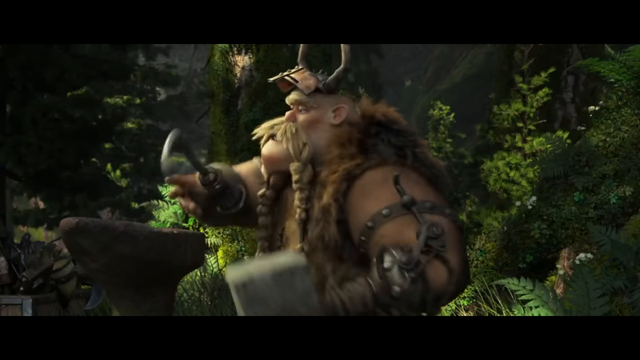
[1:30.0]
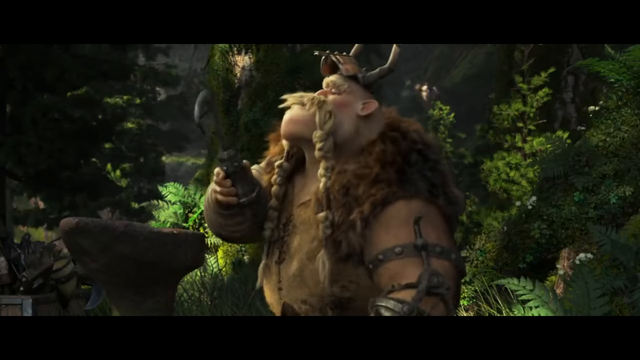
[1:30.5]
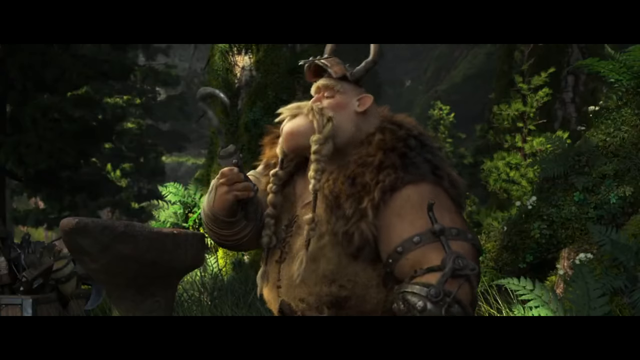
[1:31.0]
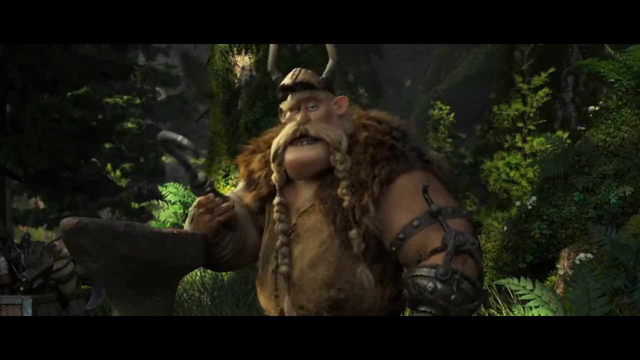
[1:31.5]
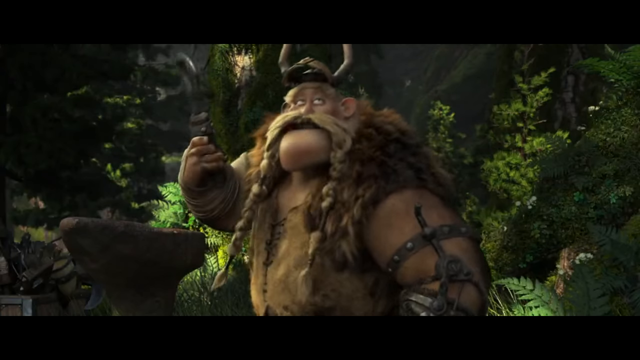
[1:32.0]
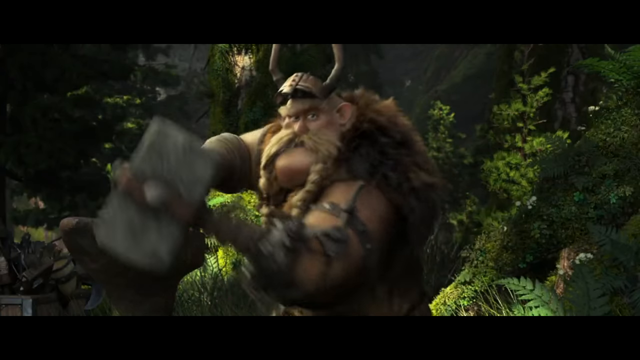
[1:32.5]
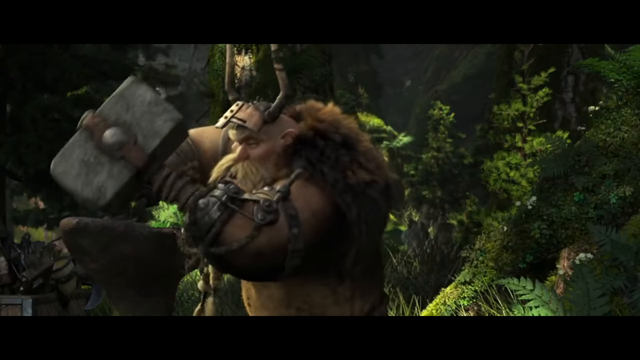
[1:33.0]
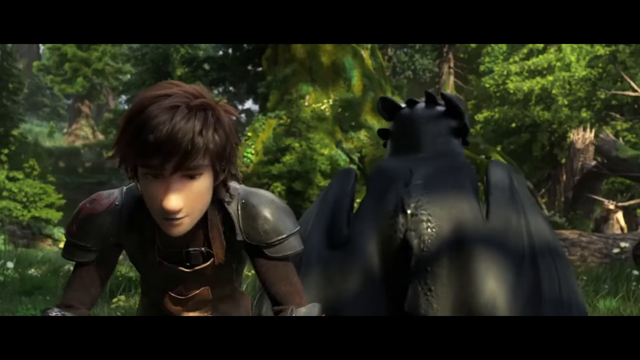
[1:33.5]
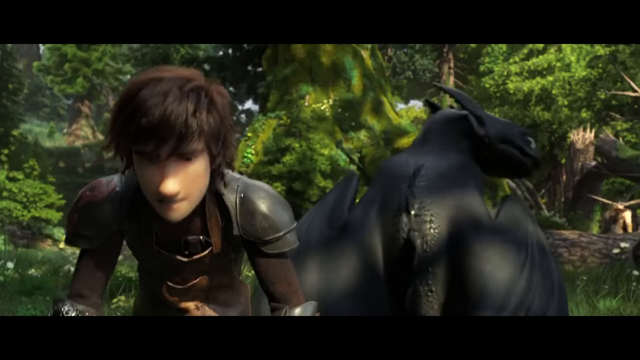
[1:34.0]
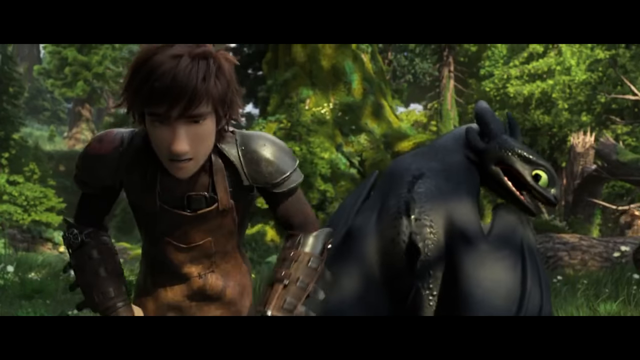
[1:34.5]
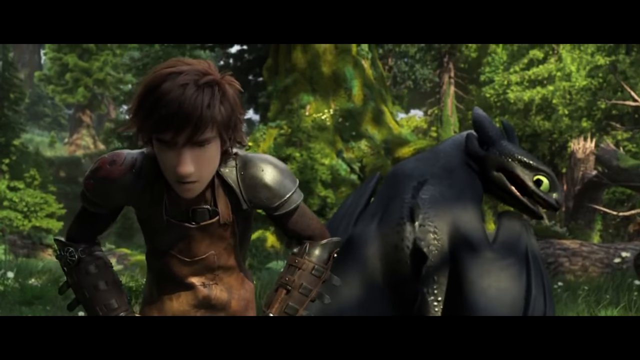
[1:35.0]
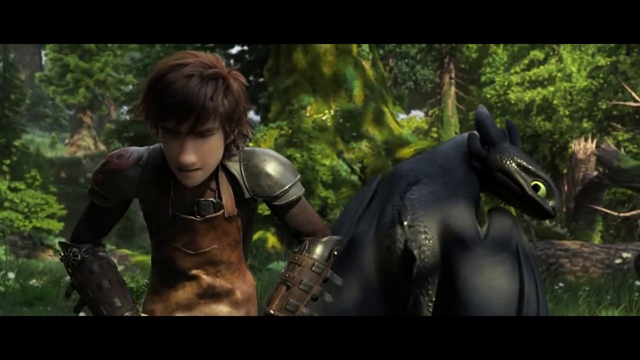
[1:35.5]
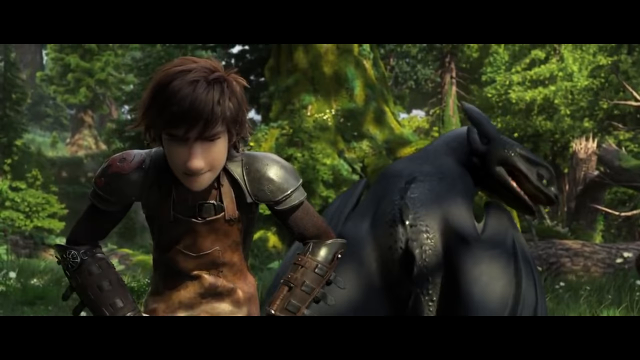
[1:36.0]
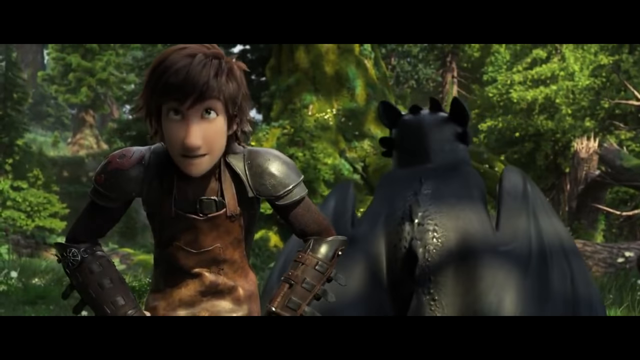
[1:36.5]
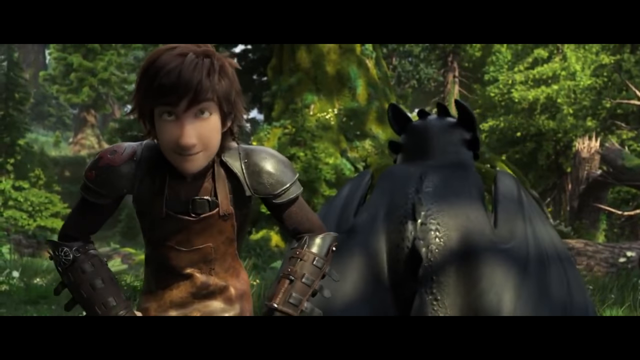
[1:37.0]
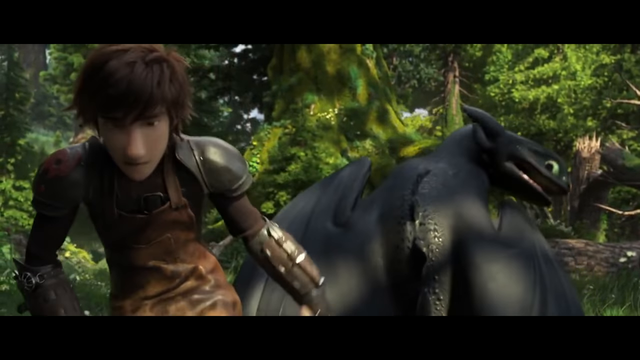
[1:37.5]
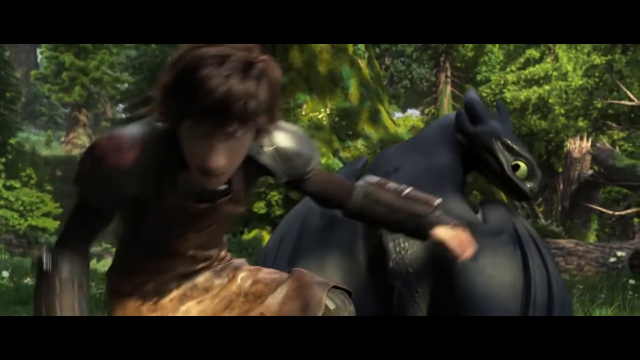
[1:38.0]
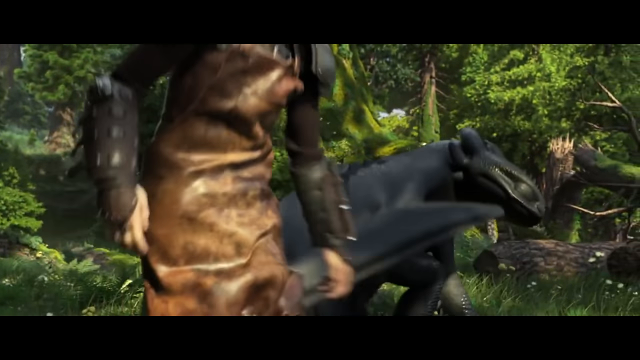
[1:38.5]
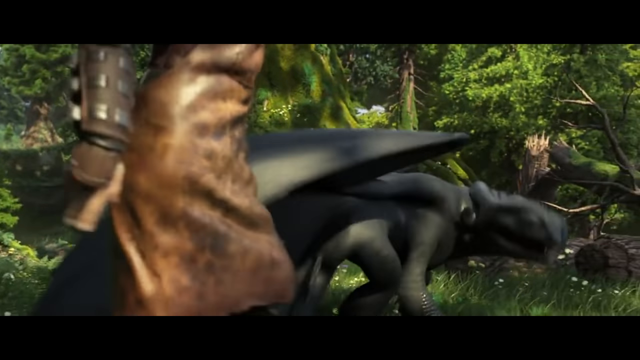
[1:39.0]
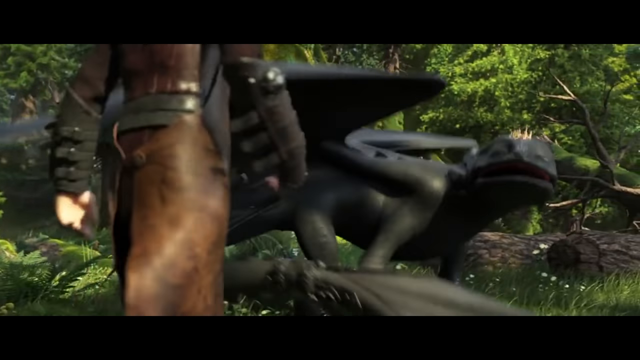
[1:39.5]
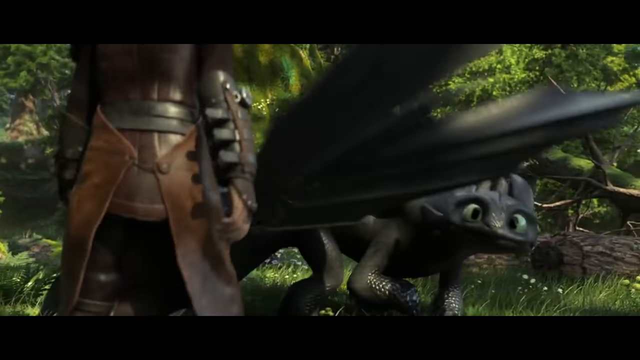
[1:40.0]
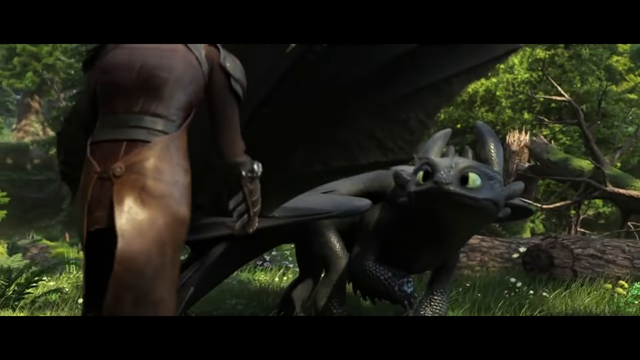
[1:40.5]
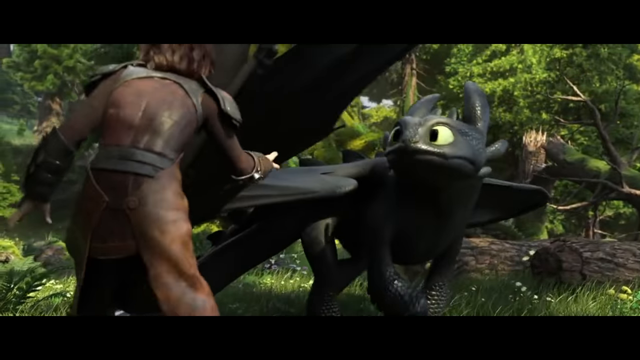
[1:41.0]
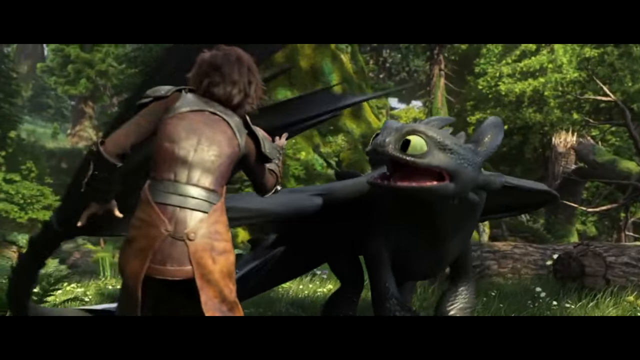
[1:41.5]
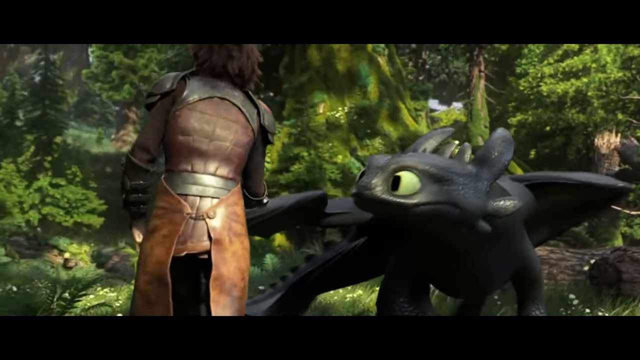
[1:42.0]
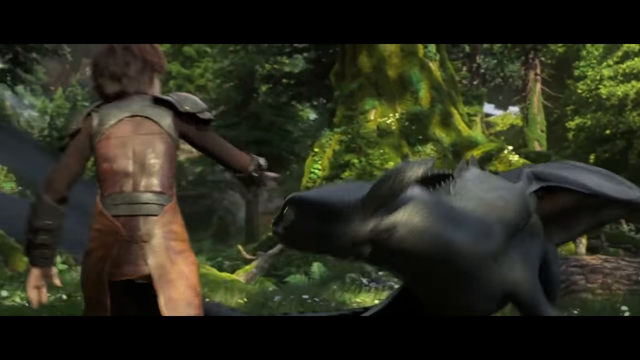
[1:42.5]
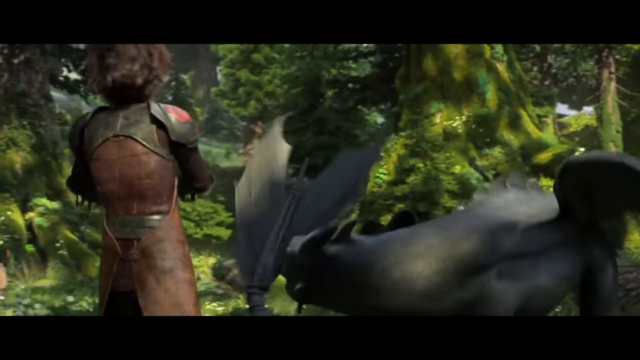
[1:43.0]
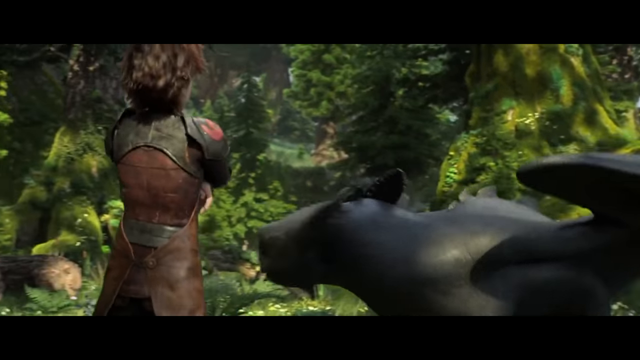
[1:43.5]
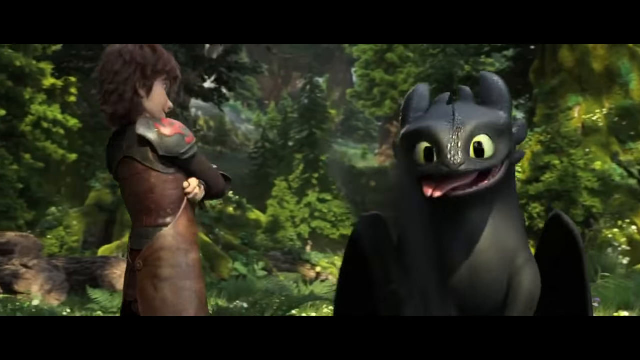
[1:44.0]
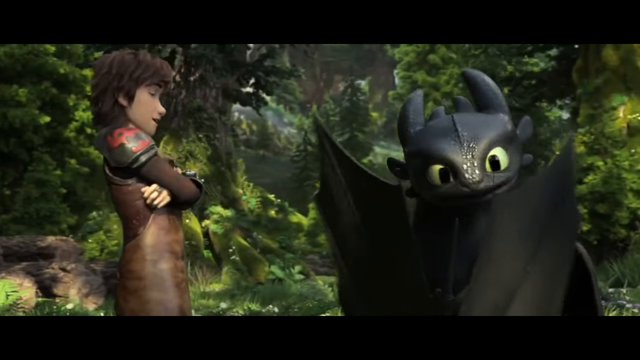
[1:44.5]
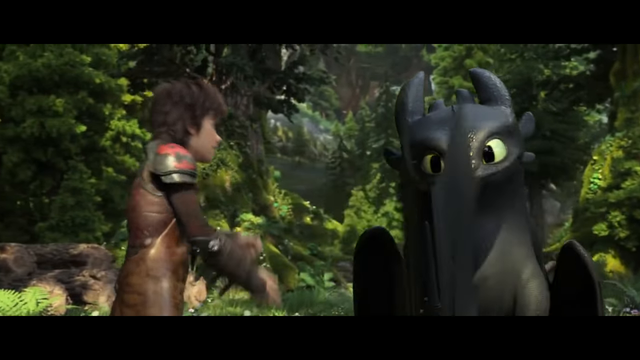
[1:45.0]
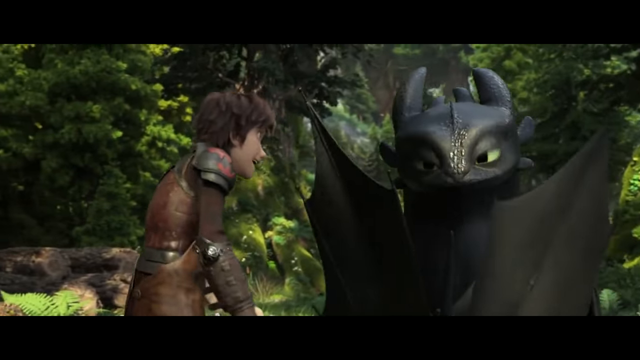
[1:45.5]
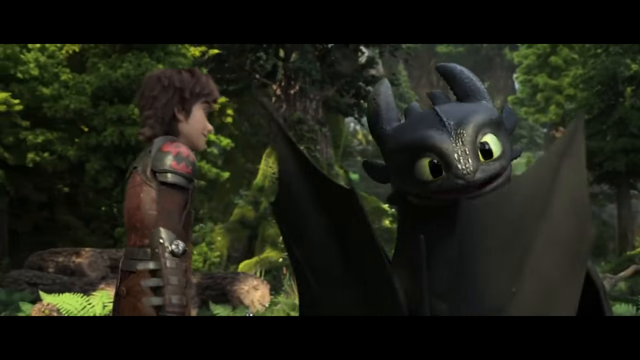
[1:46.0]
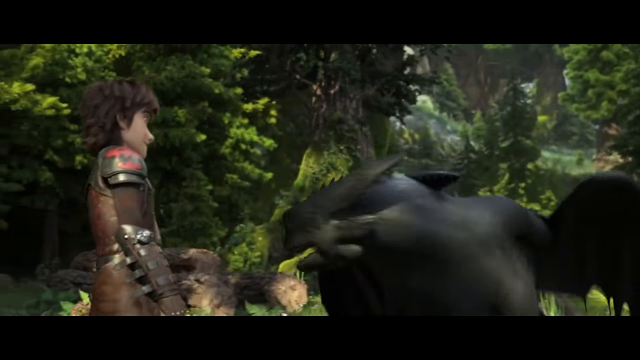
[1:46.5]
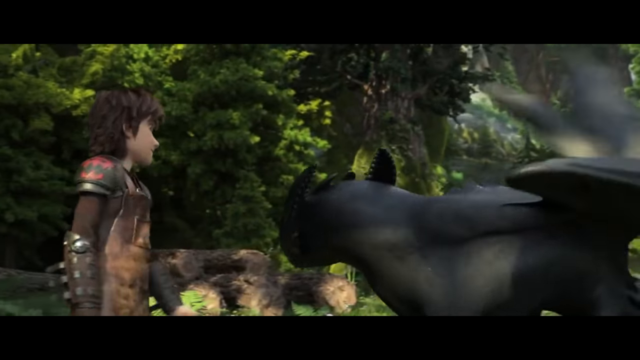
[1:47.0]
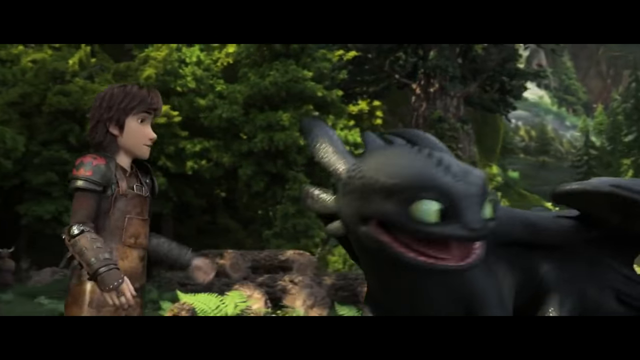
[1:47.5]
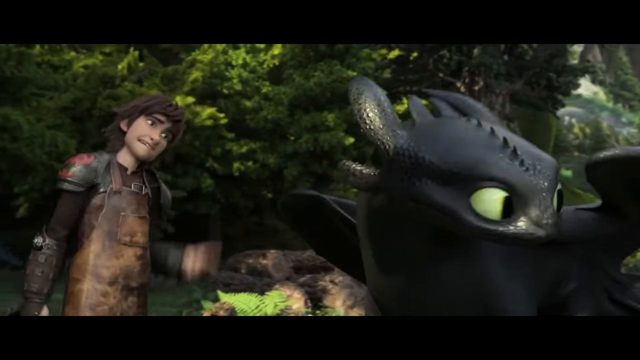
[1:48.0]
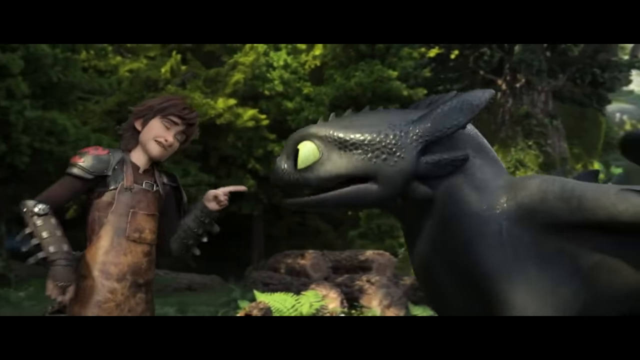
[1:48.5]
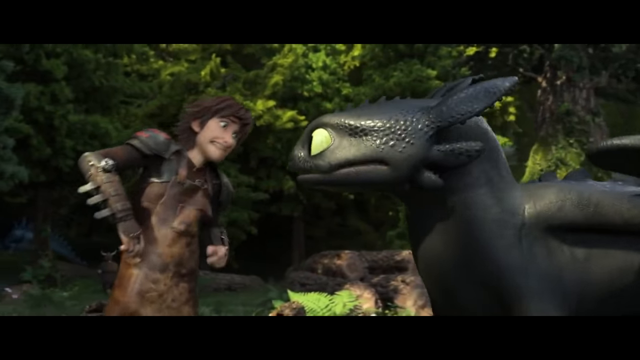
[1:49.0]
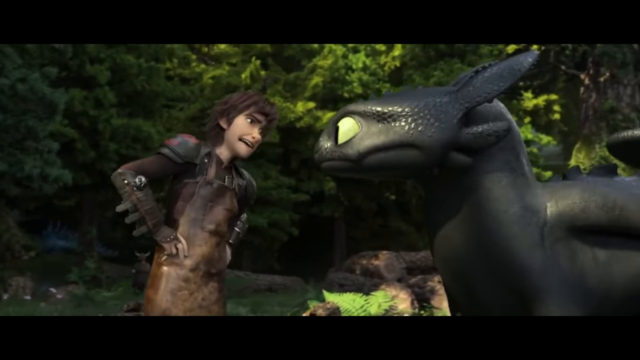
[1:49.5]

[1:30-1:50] The guy with the very long mustache is shown; it is blondish or light brown, and so long on both sides that it looks braided. He uses some type of huge hammer with both hands to shape some type of metal. The other guy finishes adding a piece to the pet dragon's tail, and the tail now looks like it has two tips at the end instead of one as before.